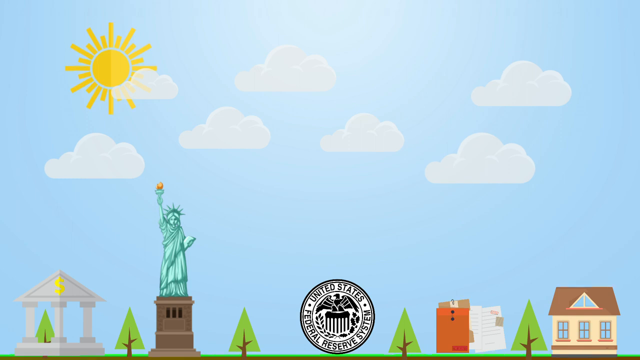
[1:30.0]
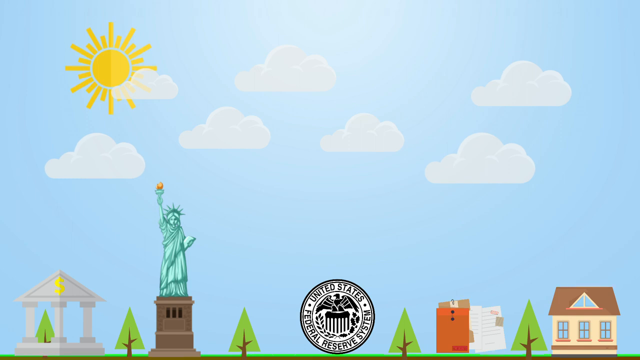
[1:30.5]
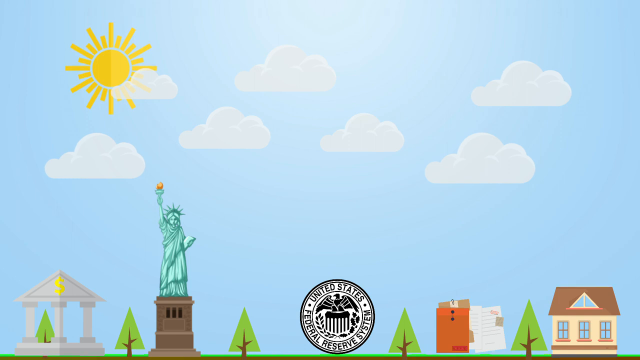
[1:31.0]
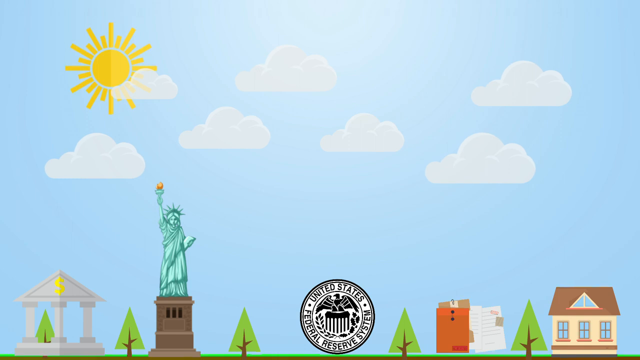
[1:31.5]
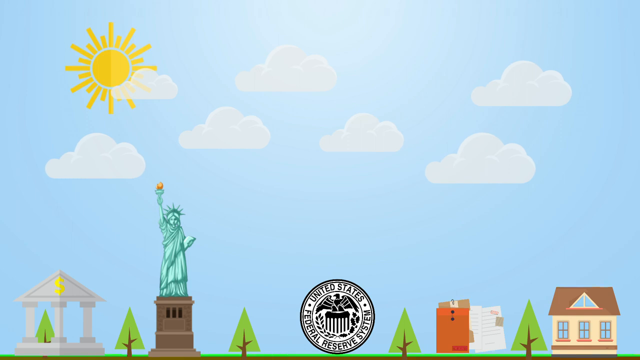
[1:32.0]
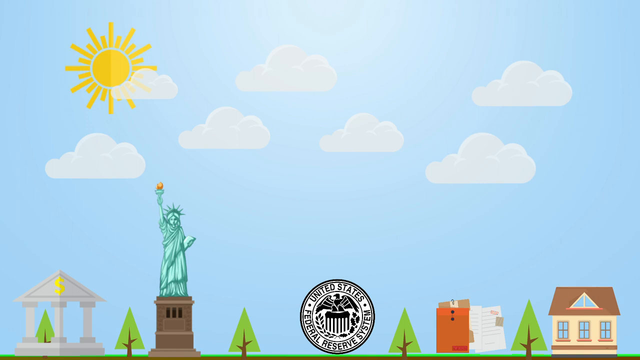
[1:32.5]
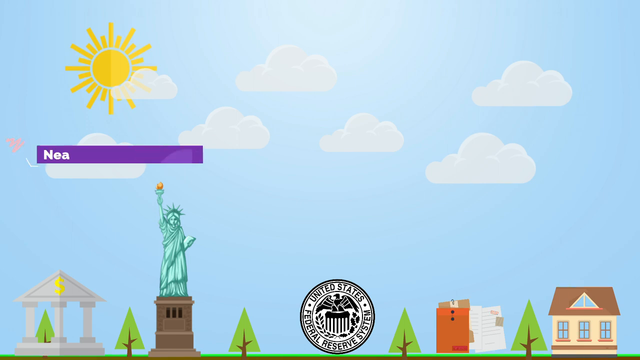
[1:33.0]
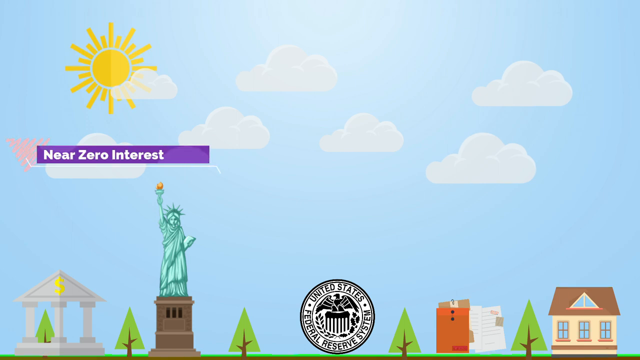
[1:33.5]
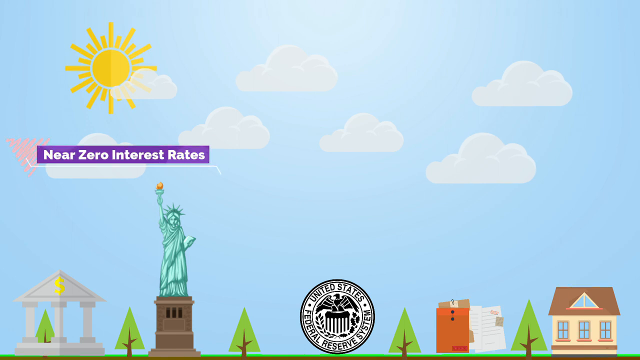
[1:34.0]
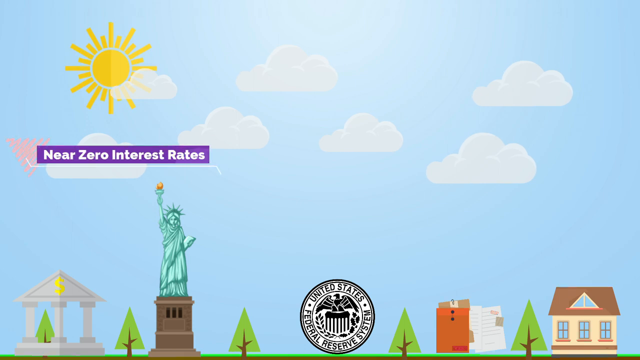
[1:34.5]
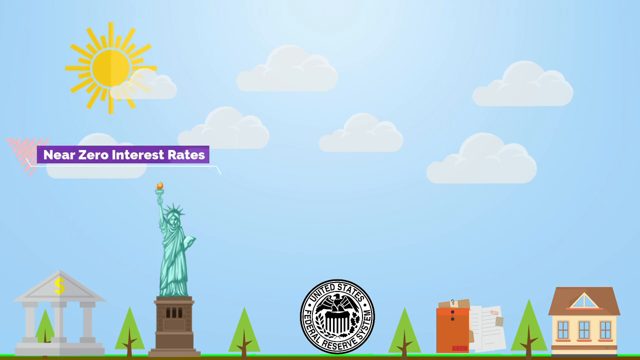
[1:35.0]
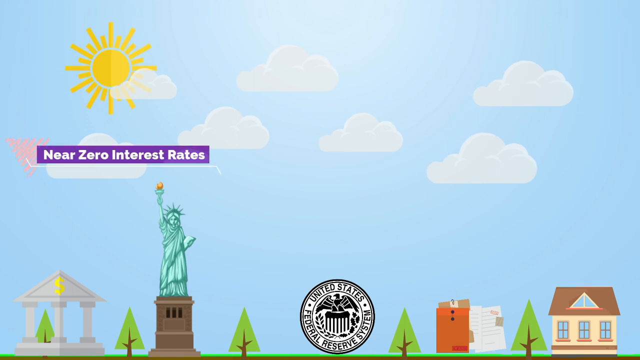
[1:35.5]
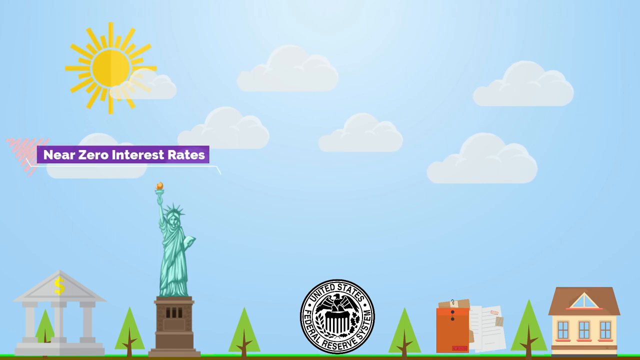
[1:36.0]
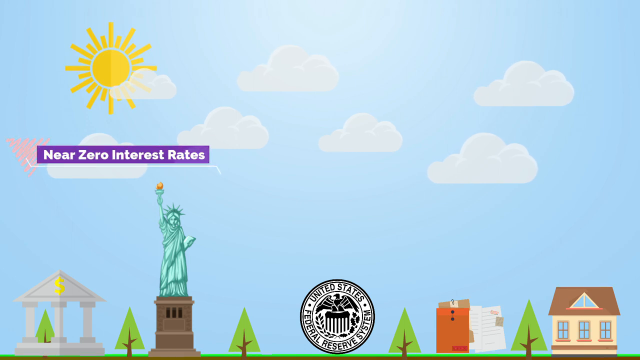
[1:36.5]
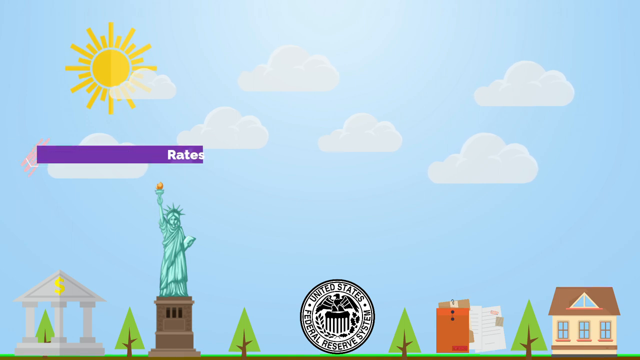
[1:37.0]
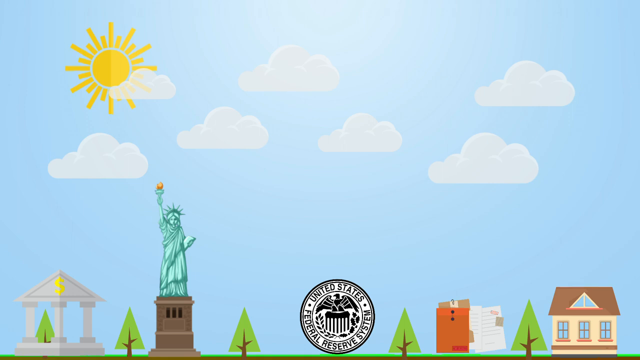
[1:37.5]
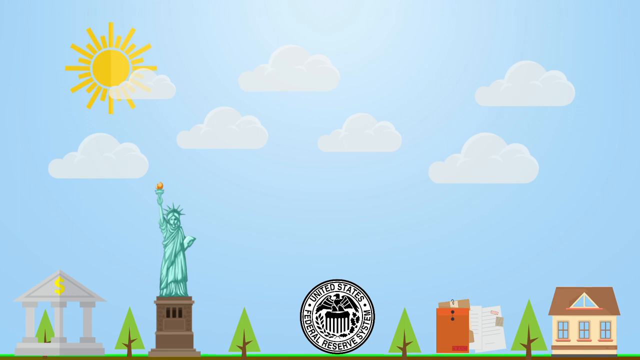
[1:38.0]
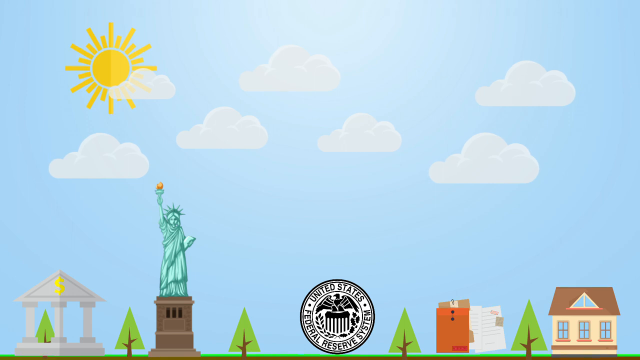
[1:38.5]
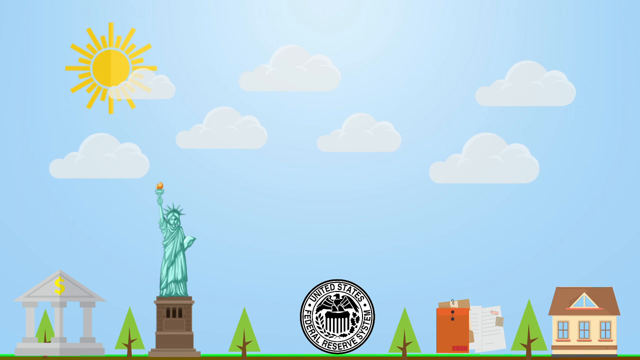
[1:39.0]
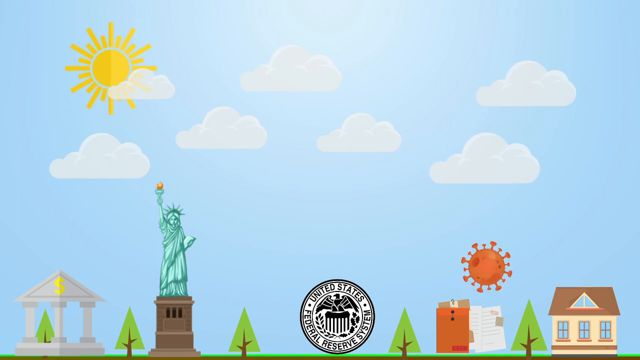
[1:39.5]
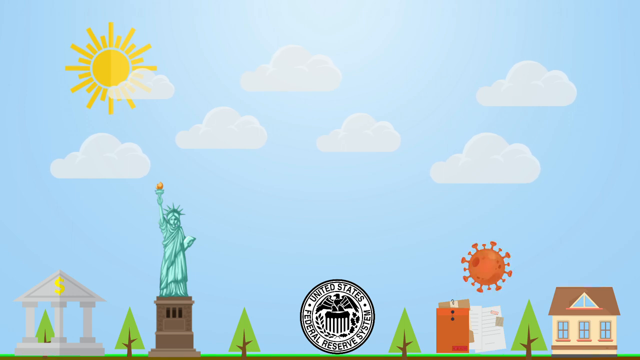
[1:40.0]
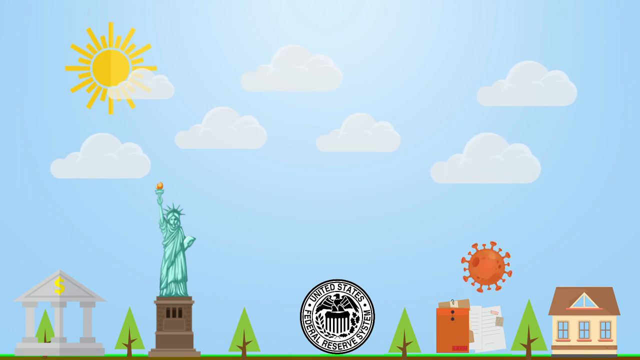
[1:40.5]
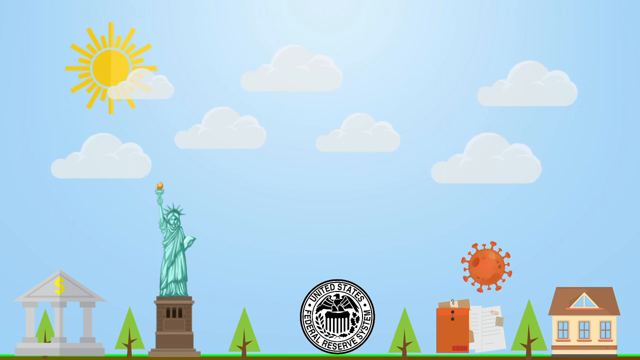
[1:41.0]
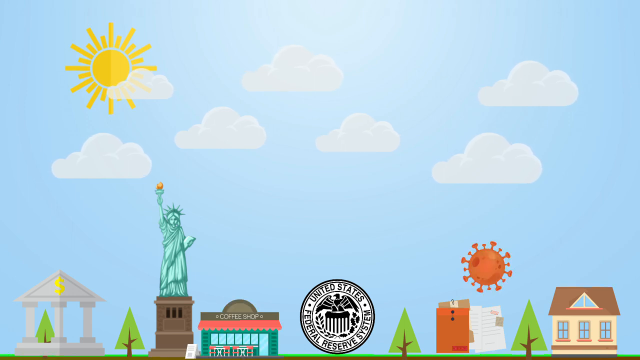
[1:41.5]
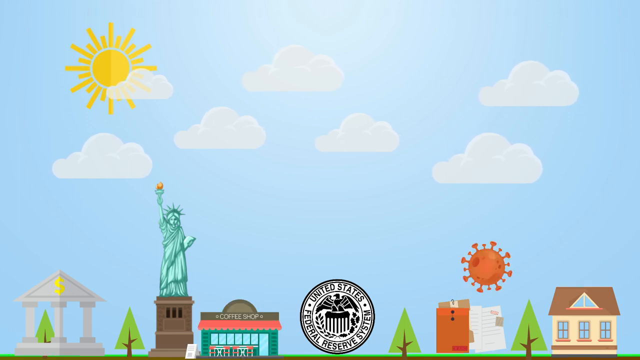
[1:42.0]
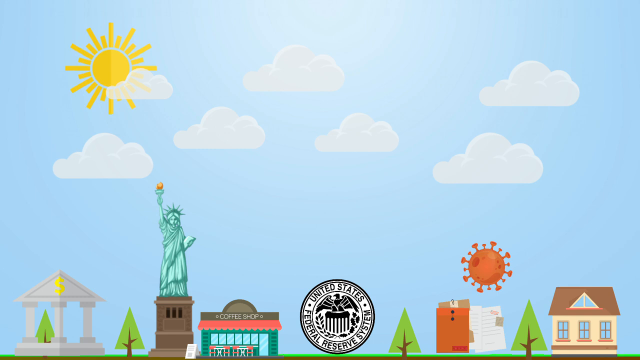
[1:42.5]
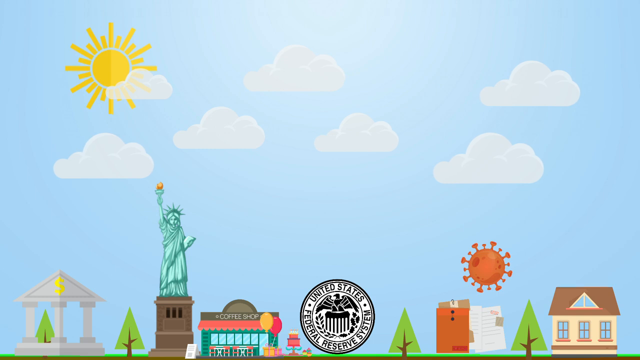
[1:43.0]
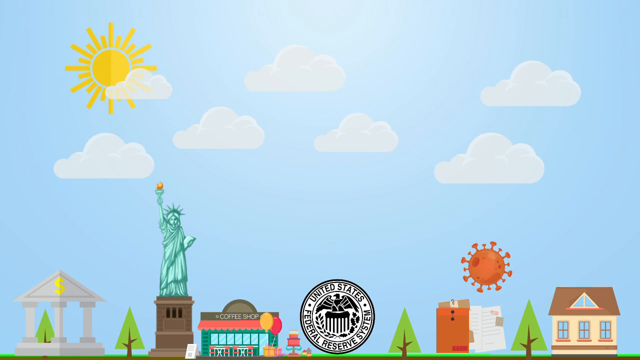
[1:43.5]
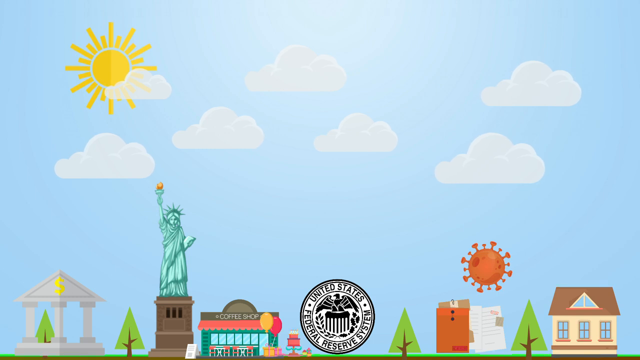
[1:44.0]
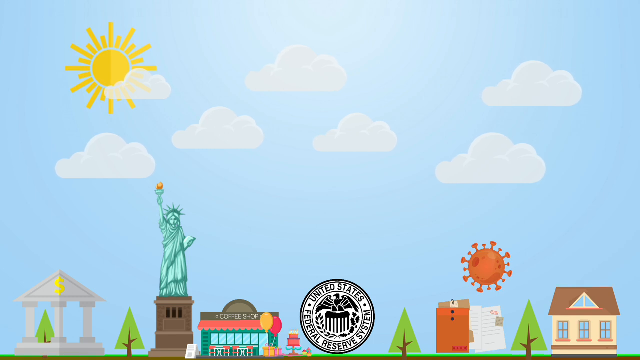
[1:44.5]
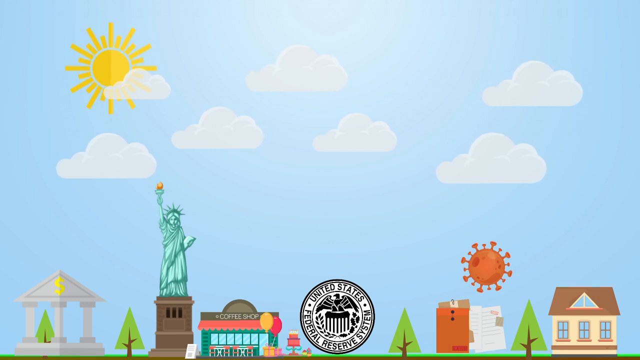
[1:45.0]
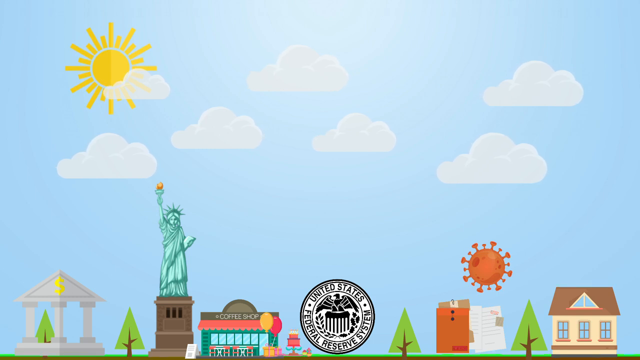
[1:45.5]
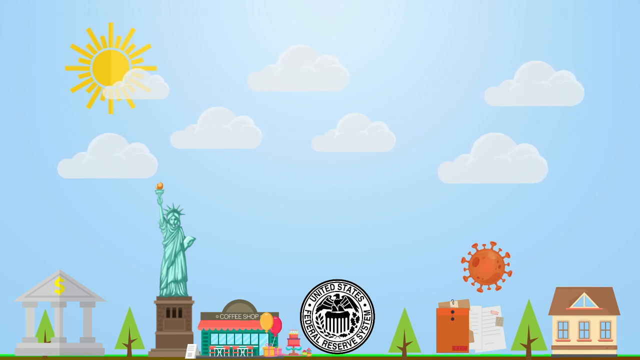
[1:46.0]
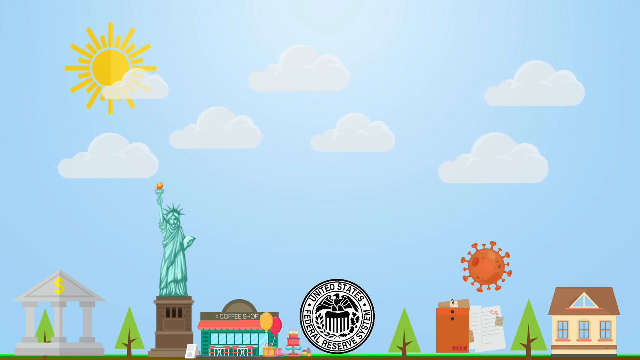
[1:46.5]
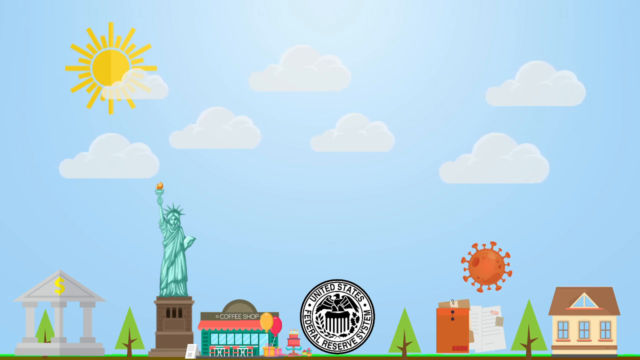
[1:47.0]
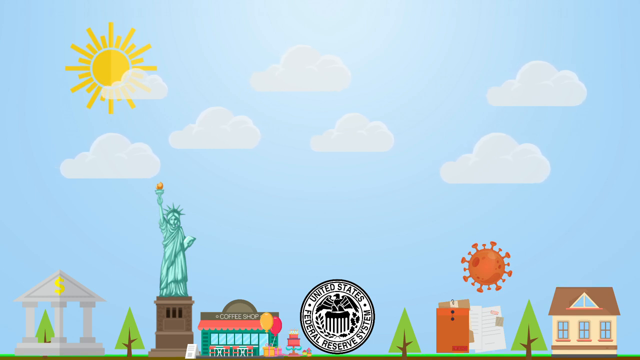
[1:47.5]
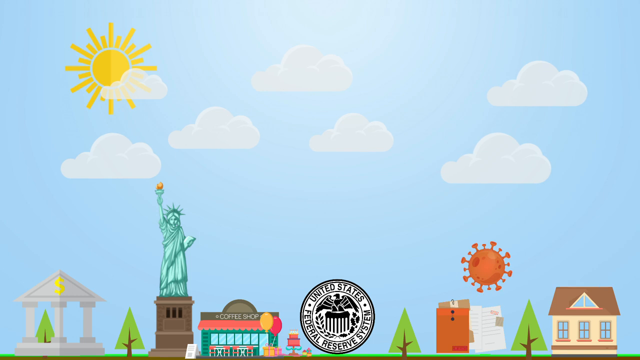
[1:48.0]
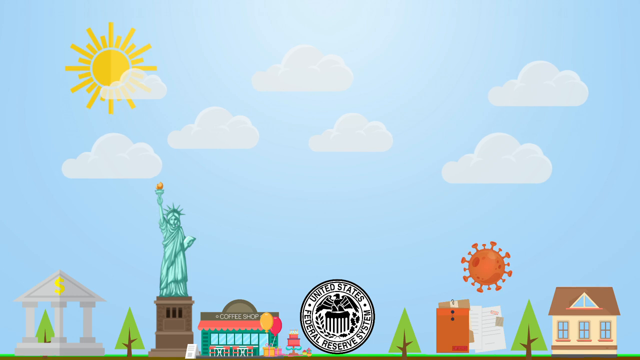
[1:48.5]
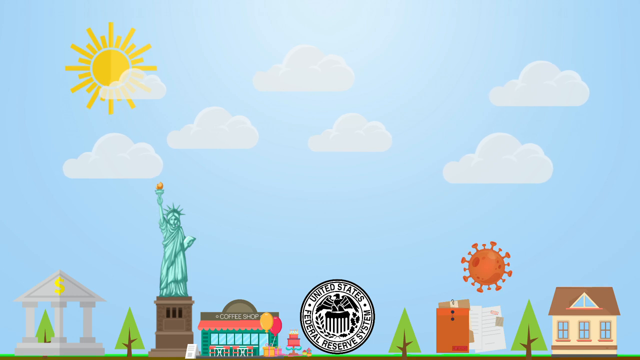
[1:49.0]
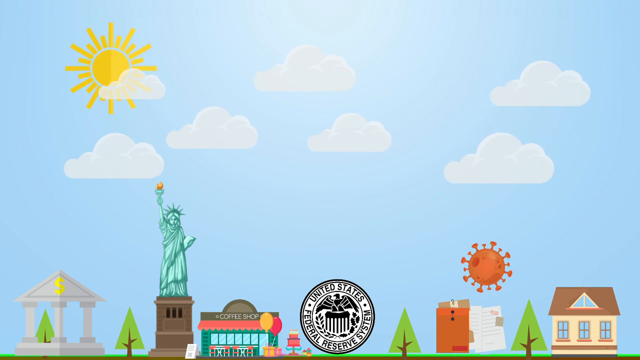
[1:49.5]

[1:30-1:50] The light blue sky shows a sun depicting rays of sunlight, still in two colors: dark gold on the left side and light gold on the right. Seven fairly white clouds move from left to right and right to left. A banner is introduced that says "near zero interest rates" in white font on a purple background. At the bottom of the screen is a building with a yellow dollar sign on the roof; the building looks like a coliseum and is painted cream. Next to the building is the Statue of Liberty with a torch whose flame is a mix of red and yellow. The statue wears a crown, holds a book, is colored green and stands on a dark brown mount. Next to the statue is a circular emblem that says "United States Federal Reserve System", with a bird in the middle of the circle, in a mix of white and navy. Next to the emblem is a dossier, orange with dark brown, with a couple of papers next to it. Next to the dossier is a building with a brown roof, an attic and three windows. Placed side by side with all these images are five green pine trees with dark brown branches. Additional images are introduced: a coffee shop building and a red virus-looking object with lots of spikes around its round shape.